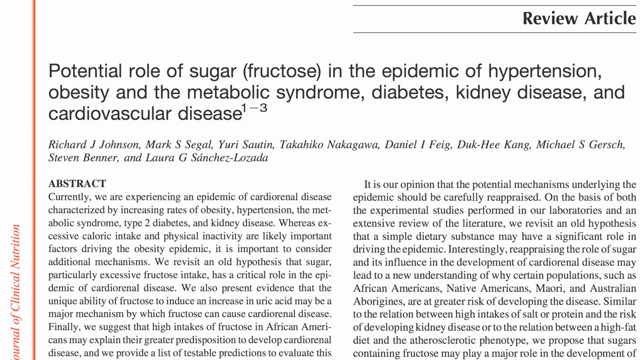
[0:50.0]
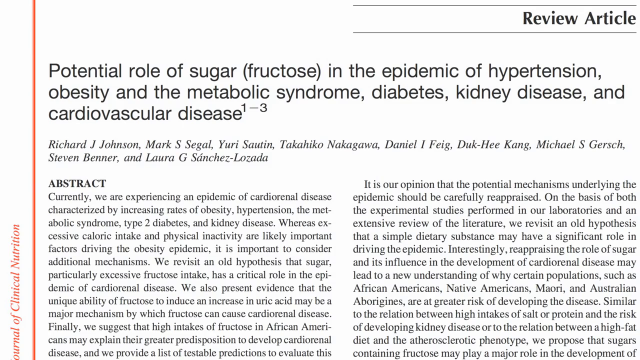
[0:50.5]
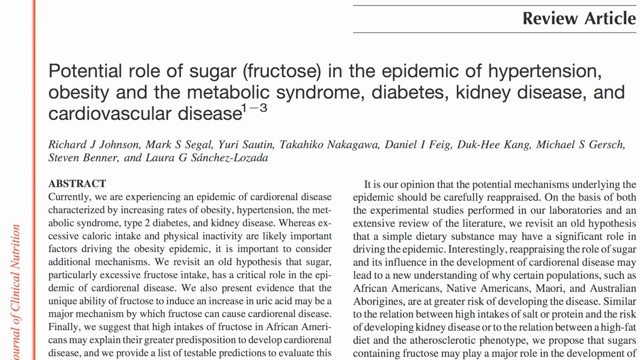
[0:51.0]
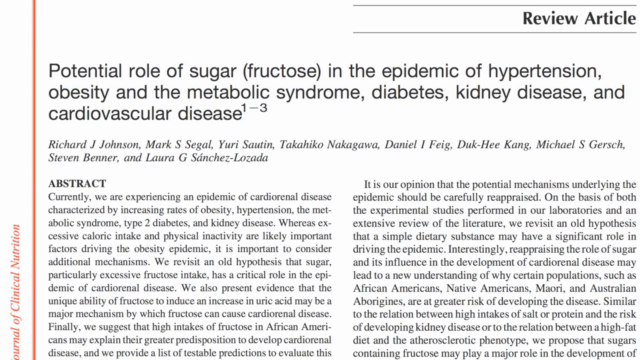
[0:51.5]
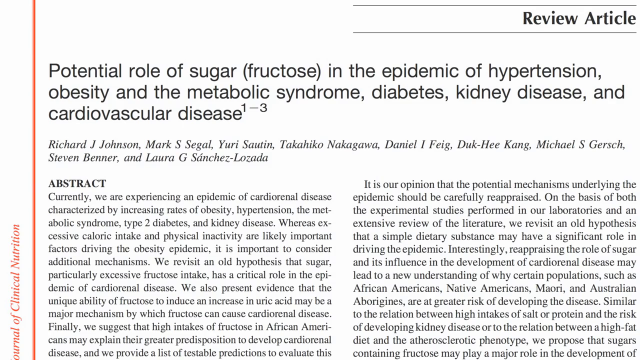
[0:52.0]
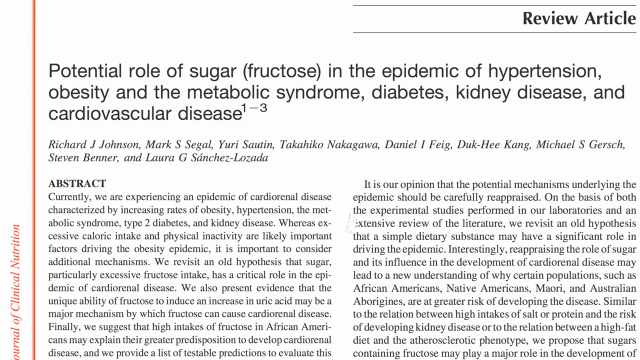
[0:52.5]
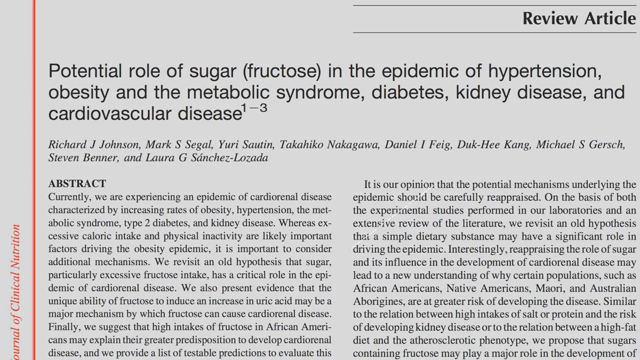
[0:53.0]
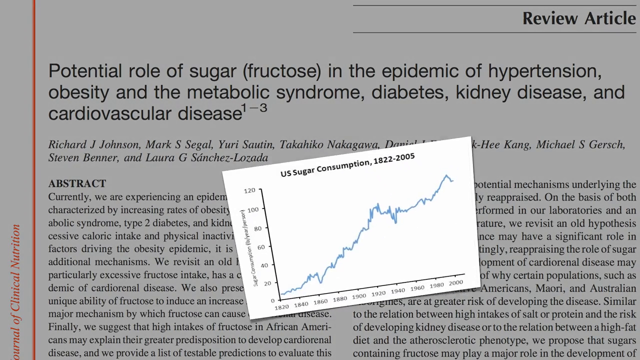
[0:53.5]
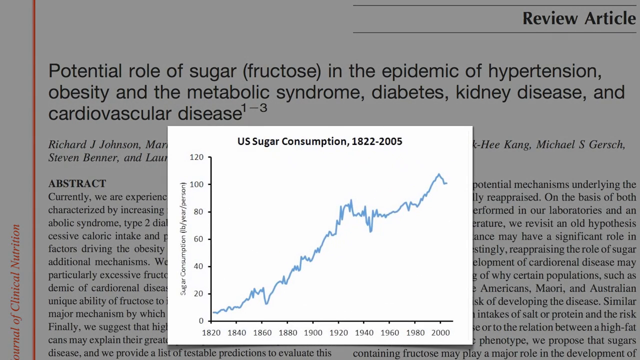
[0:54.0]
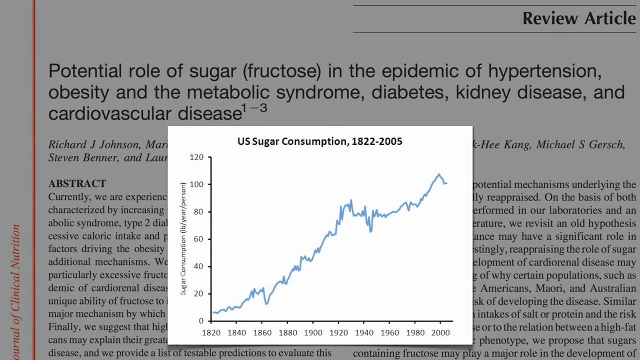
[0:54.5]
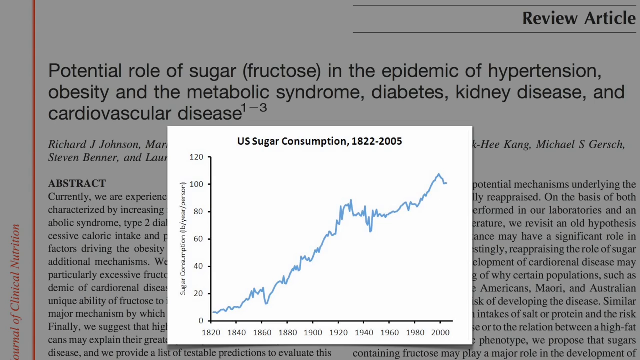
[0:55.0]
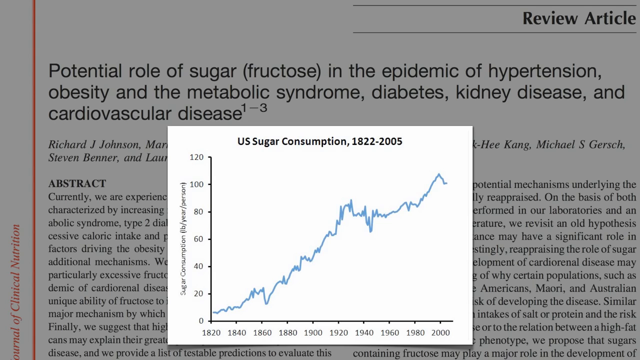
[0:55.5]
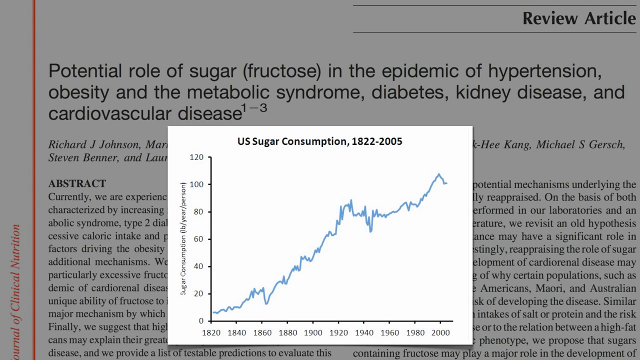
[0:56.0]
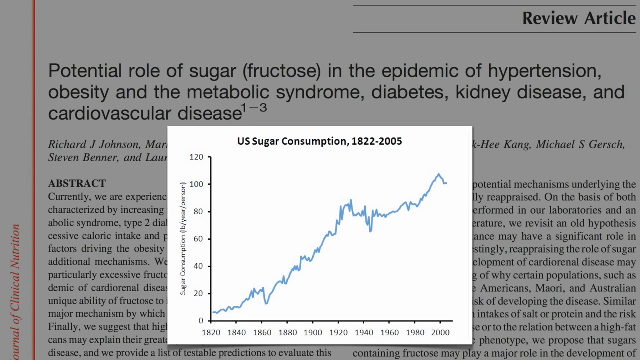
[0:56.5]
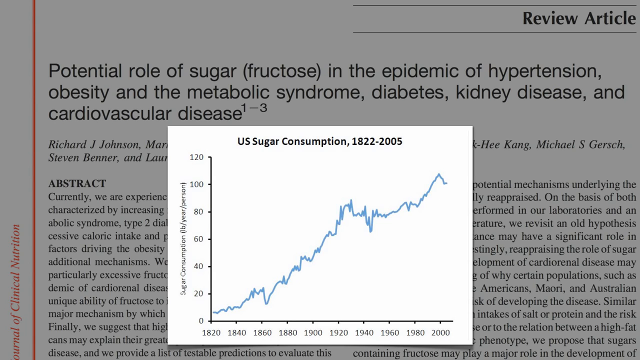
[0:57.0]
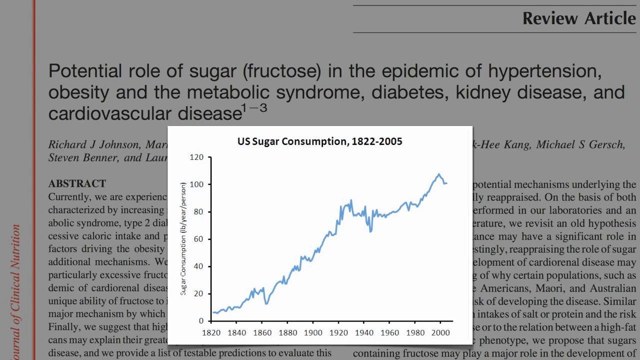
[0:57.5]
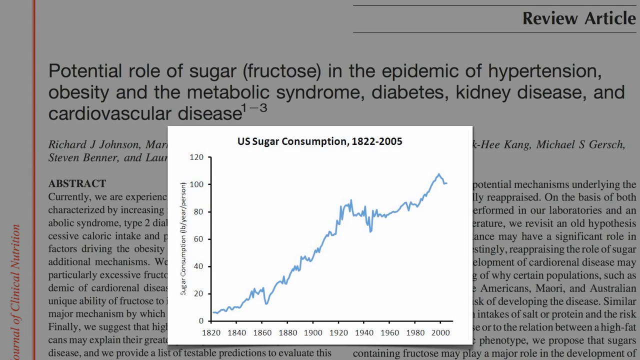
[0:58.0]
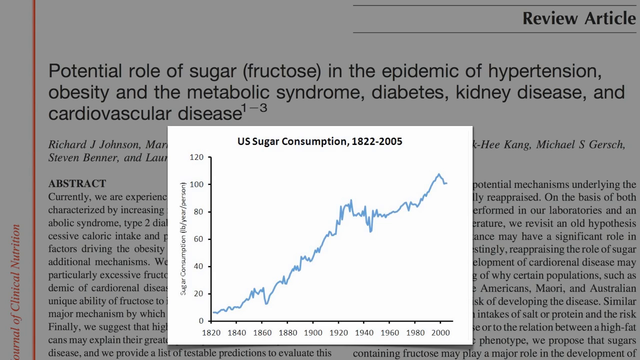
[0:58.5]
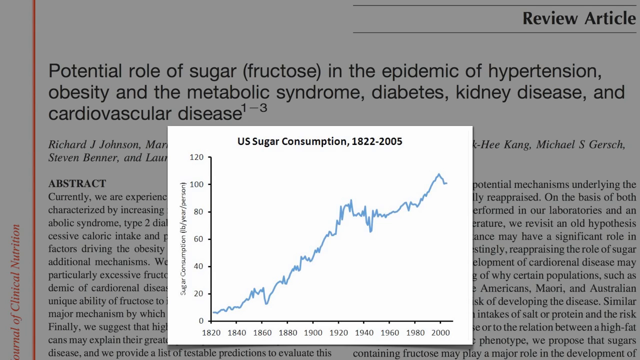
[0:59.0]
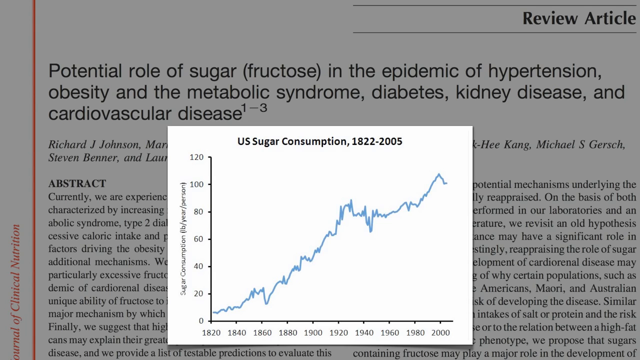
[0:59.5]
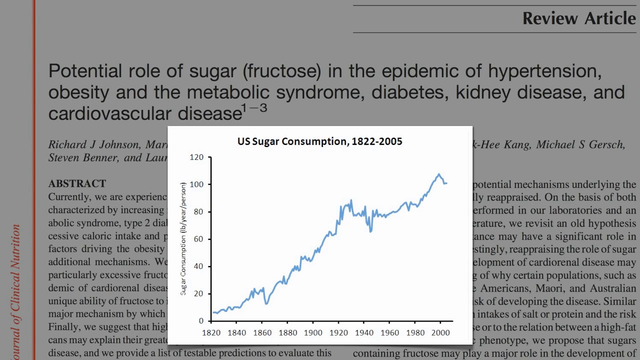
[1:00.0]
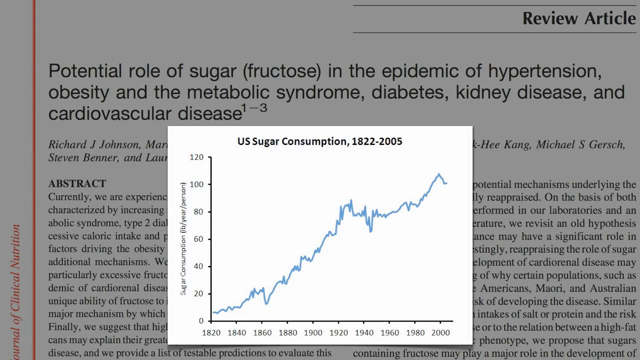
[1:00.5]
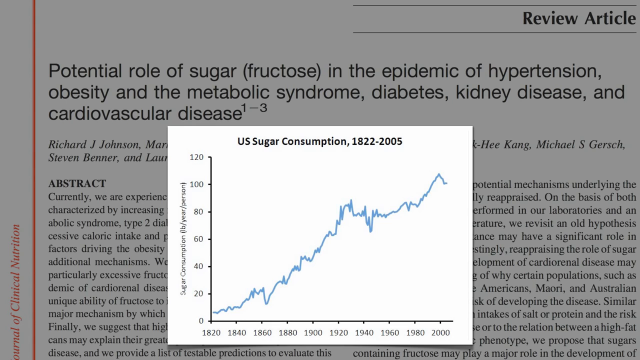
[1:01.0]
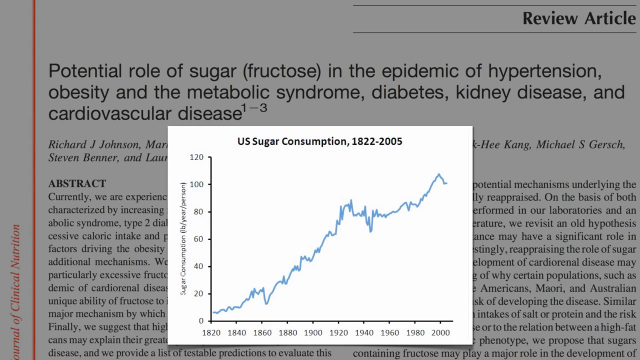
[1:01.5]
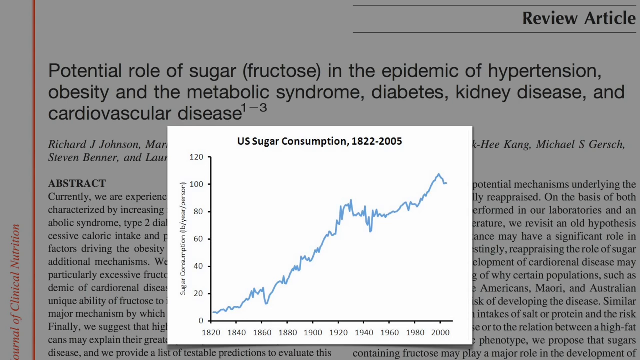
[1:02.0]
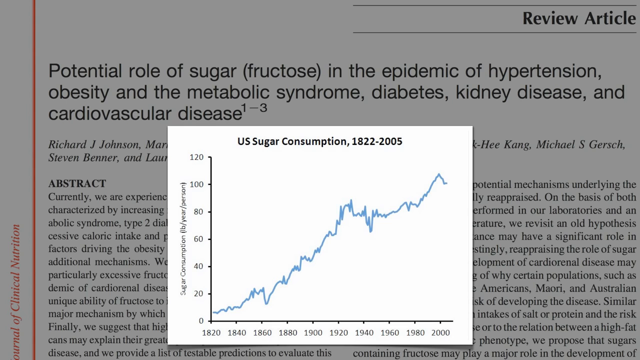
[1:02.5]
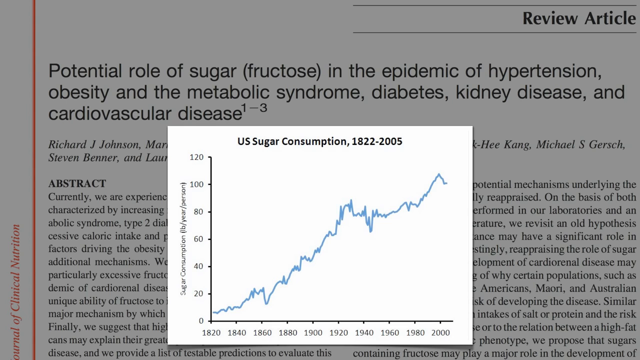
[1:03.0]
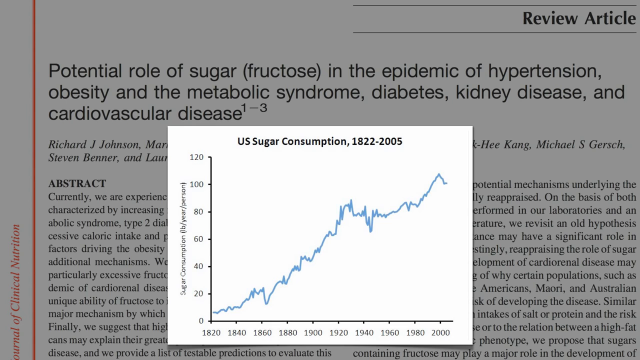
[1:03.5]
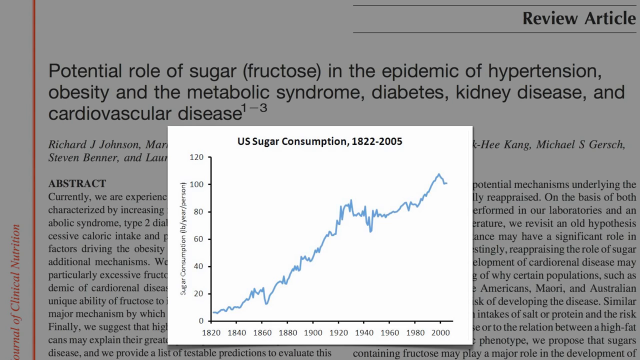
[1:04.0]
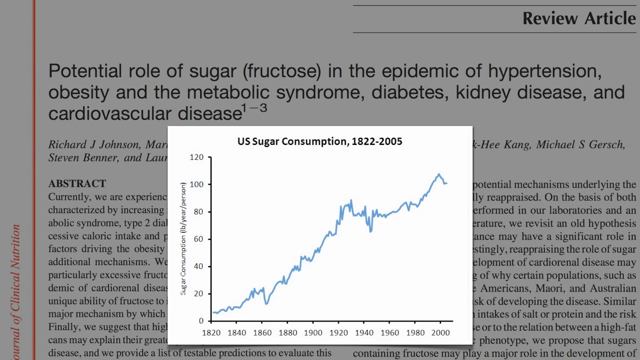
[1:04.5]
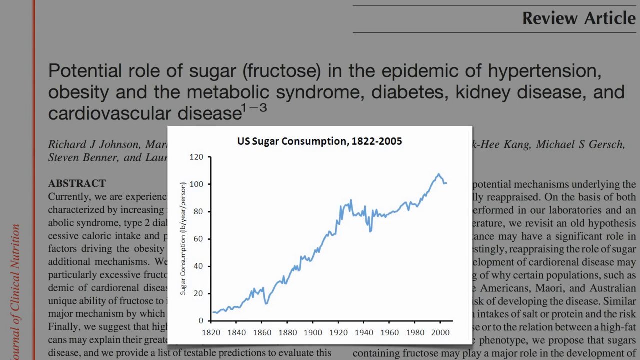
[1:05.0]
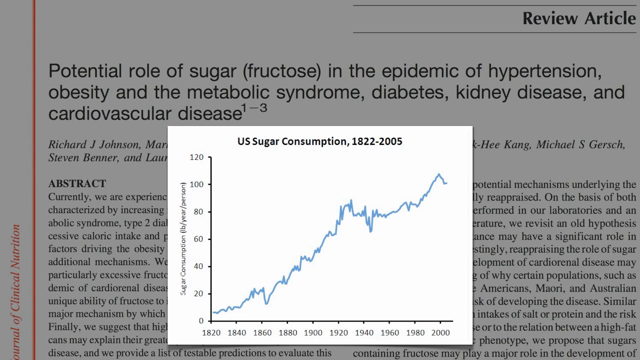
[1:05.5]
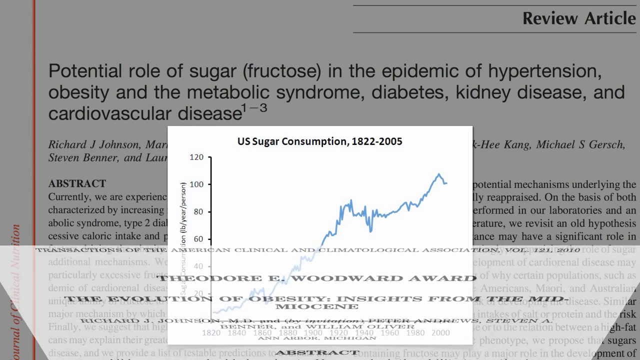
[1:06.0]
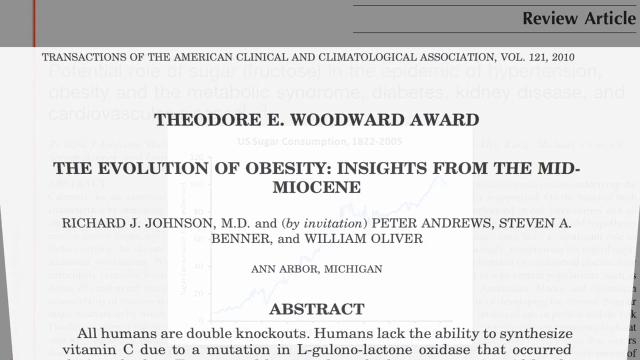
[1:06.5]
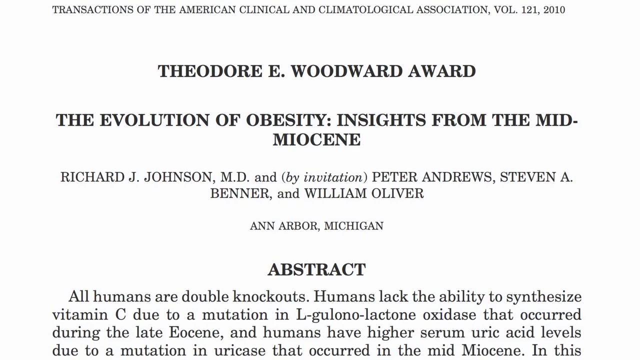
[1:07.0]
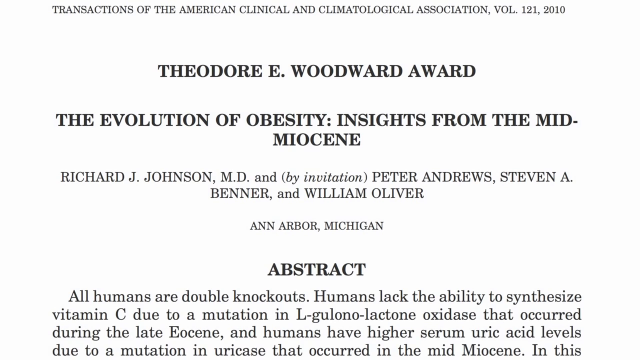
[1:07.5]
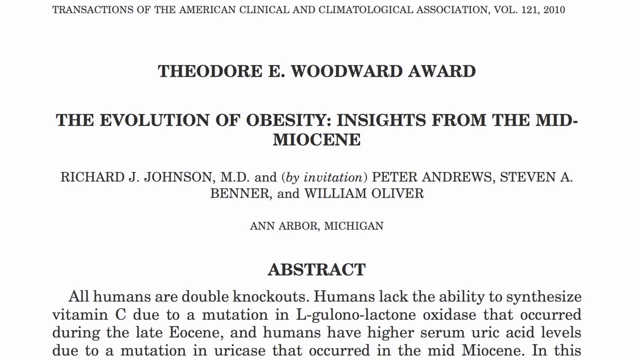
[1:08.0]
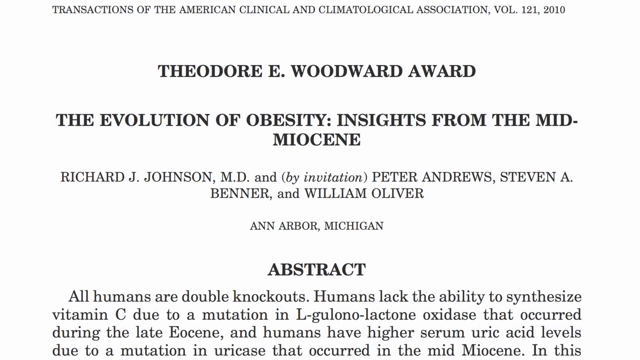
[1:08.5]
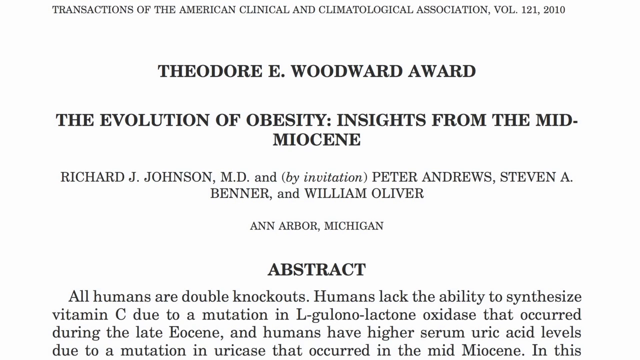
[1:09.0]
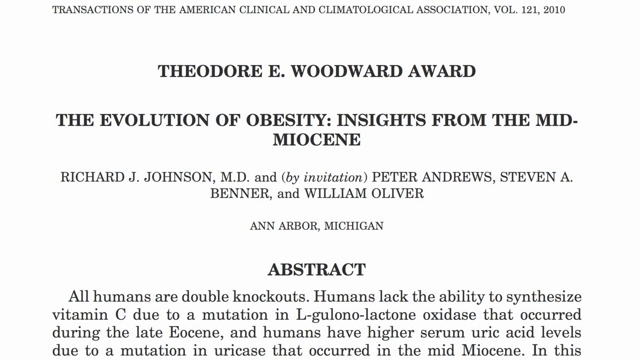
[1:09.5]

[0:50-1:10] A white paper shows what looks to be a newspaper article, with "Review Article" at the top and below it "Potential Role of Sugar Fructose in the Epidemic of Hypertension, Obesity and the Metabolic Syndrome, Diabetes, Kidney Disease and Cardiovascular Disease," plus some writing at the bottom of the screen. A chart that looks like a graph then pops up, titled "U.S. Sugar Consumption 1822 through 2005." A blue line on the graph goes up and seems to rise very high by the end of the chart. Another paper then pops up reading "Theodore E. Woodward Award," with "The Evolution of Obesity, Insights from the Mid-Miocene" below it and some writing underneath.